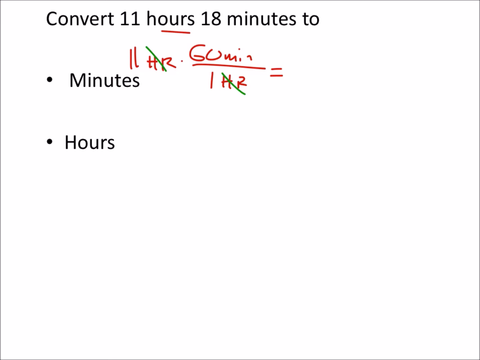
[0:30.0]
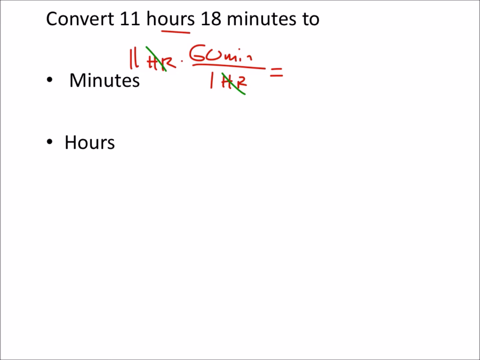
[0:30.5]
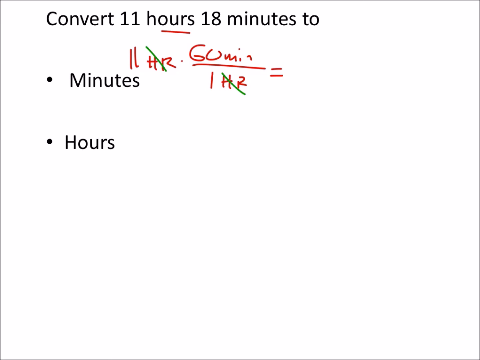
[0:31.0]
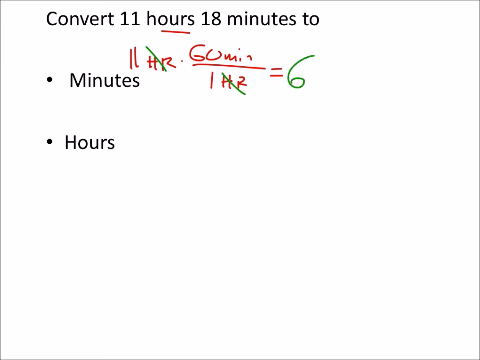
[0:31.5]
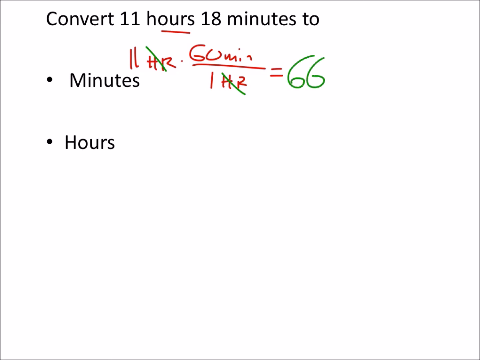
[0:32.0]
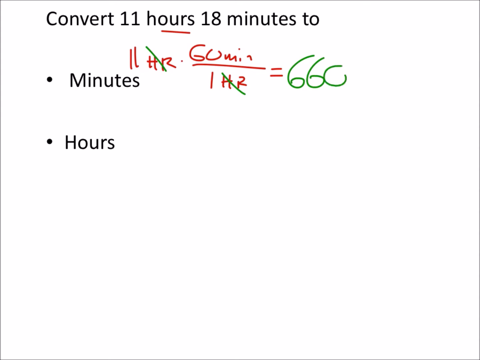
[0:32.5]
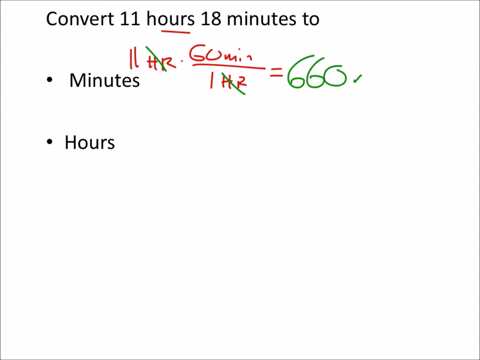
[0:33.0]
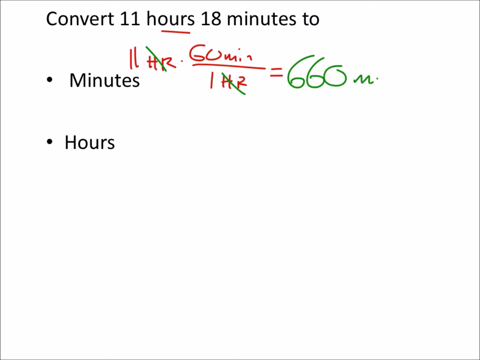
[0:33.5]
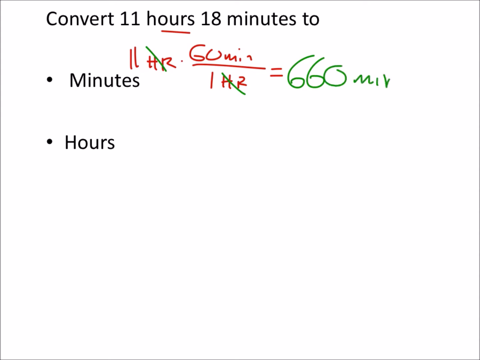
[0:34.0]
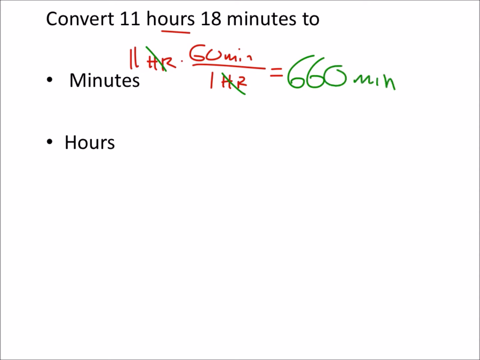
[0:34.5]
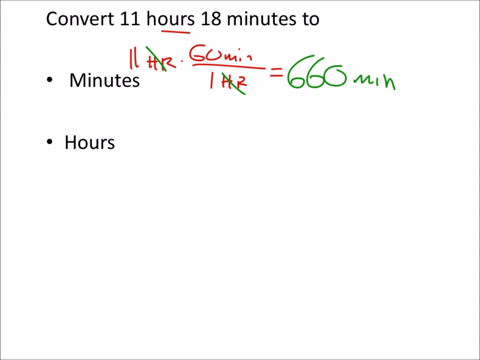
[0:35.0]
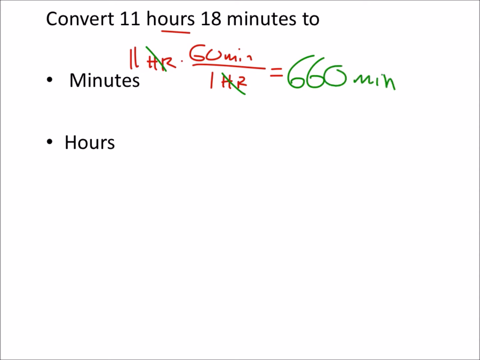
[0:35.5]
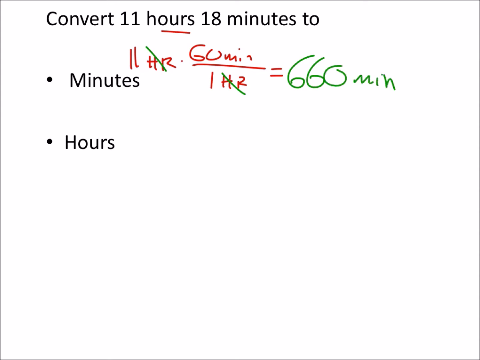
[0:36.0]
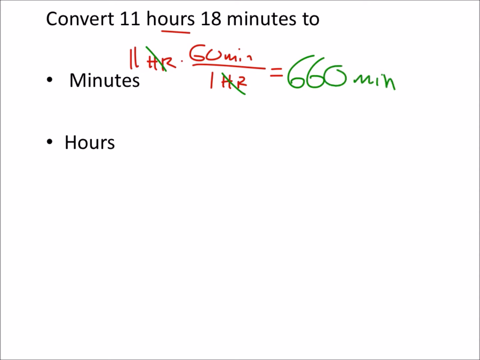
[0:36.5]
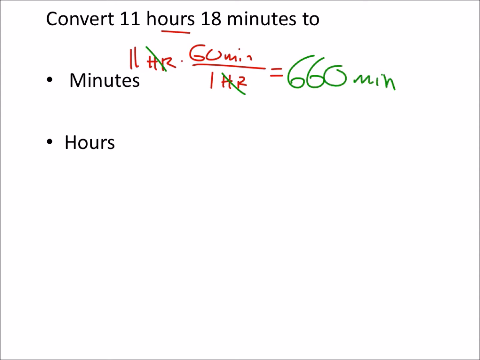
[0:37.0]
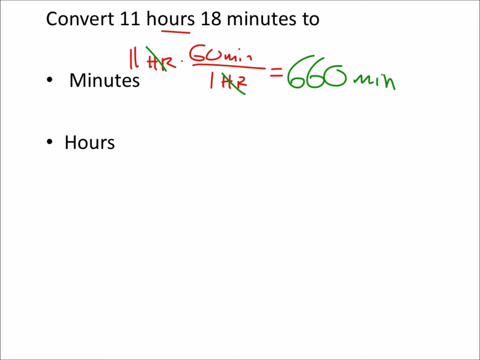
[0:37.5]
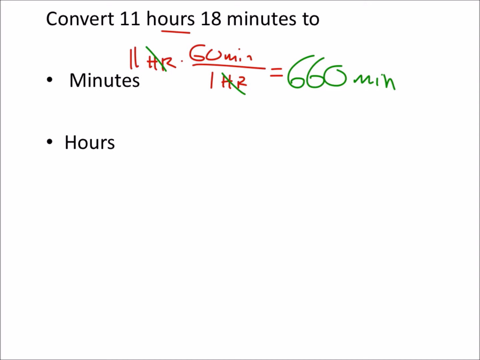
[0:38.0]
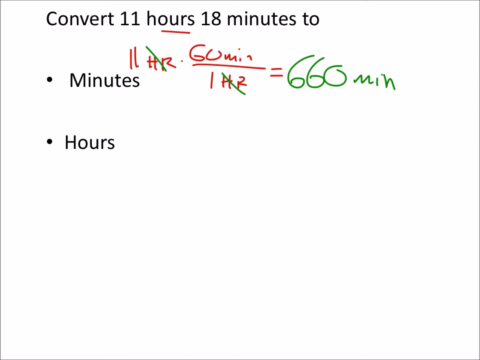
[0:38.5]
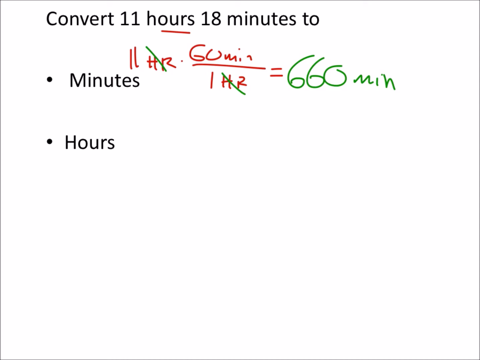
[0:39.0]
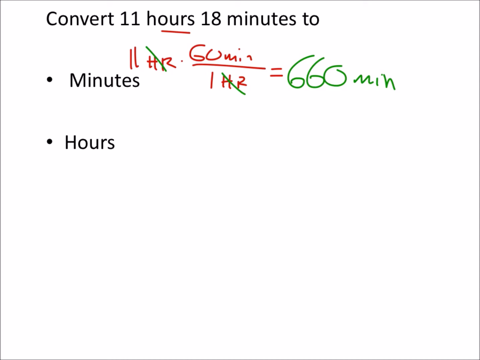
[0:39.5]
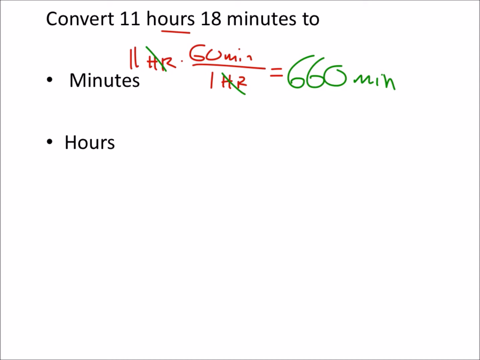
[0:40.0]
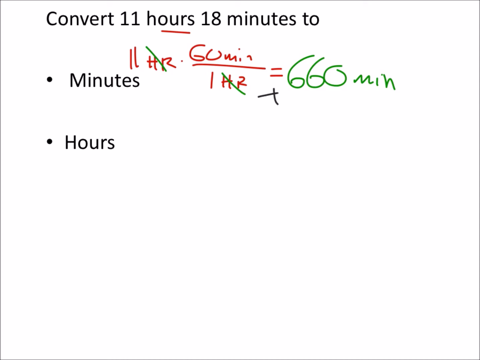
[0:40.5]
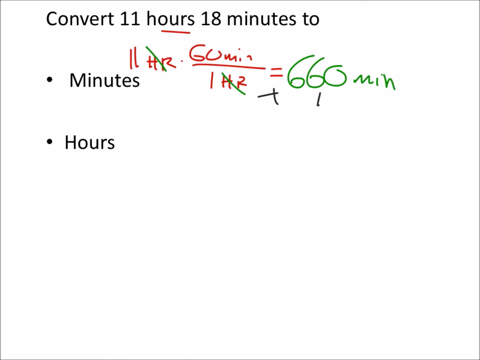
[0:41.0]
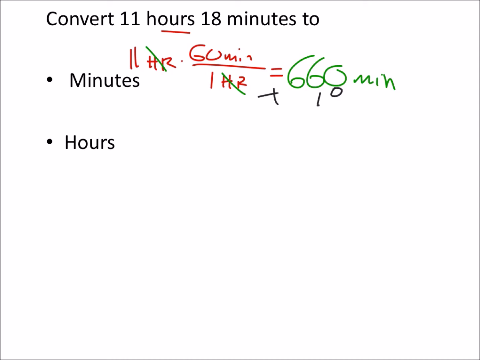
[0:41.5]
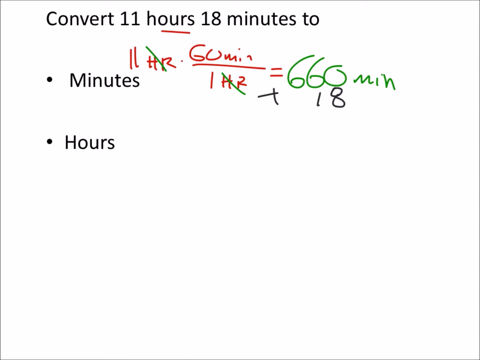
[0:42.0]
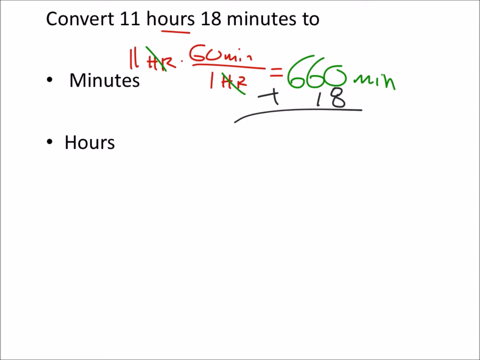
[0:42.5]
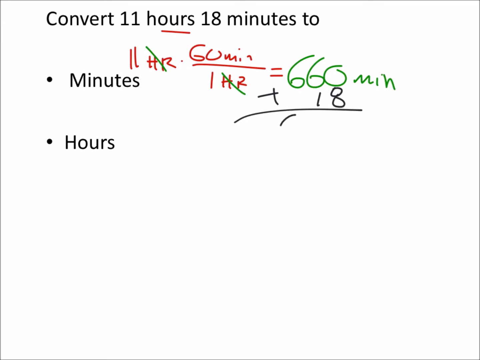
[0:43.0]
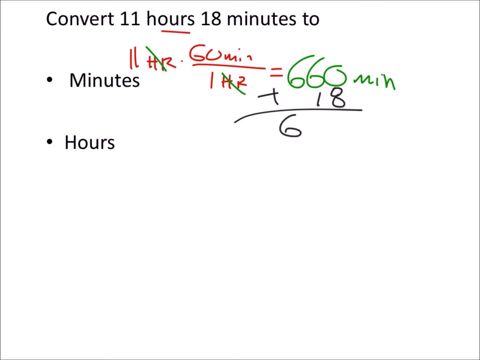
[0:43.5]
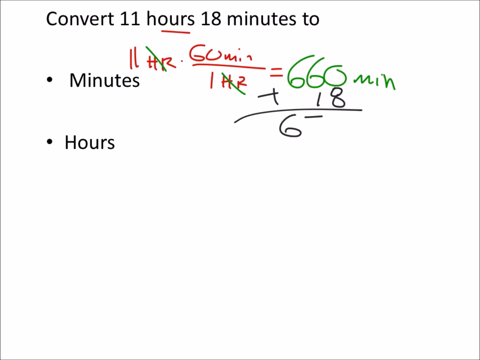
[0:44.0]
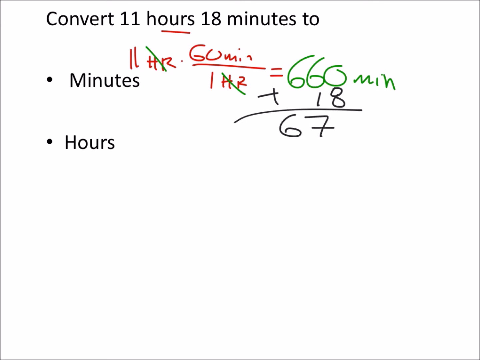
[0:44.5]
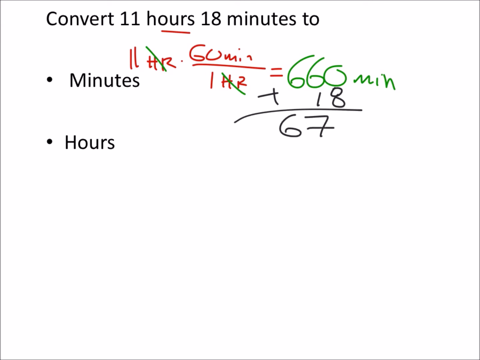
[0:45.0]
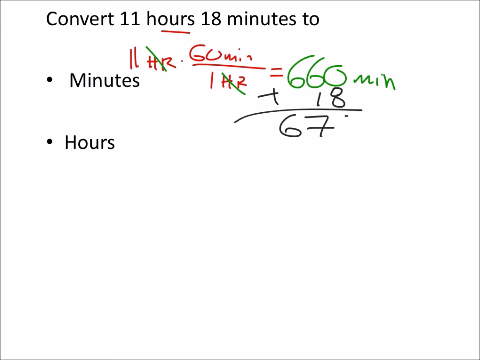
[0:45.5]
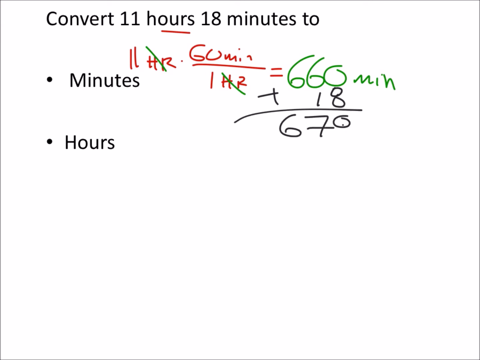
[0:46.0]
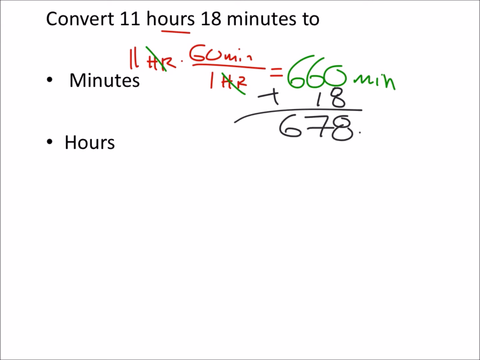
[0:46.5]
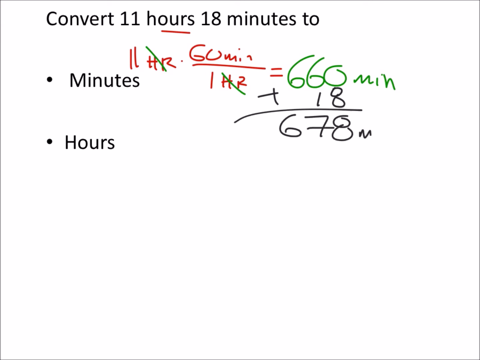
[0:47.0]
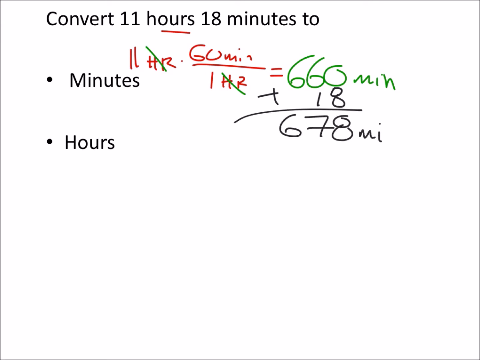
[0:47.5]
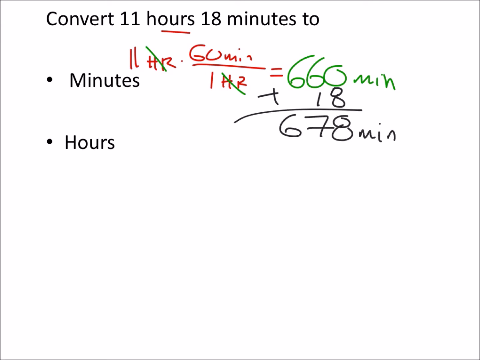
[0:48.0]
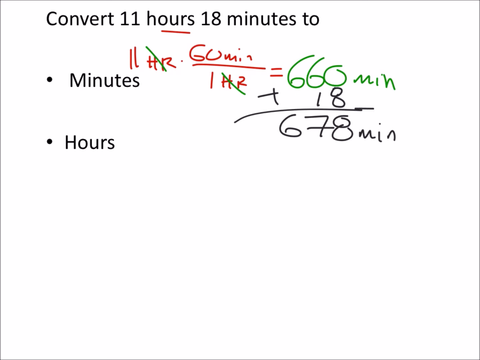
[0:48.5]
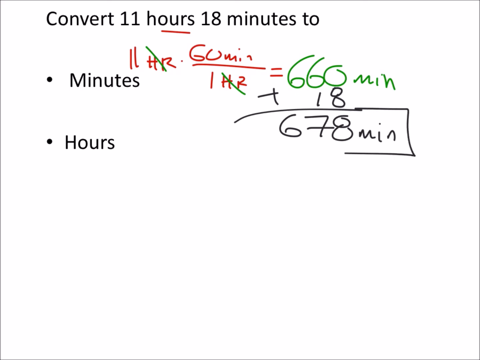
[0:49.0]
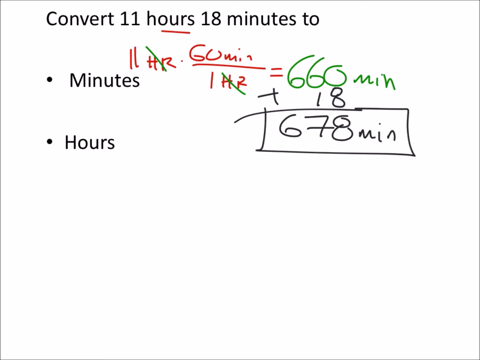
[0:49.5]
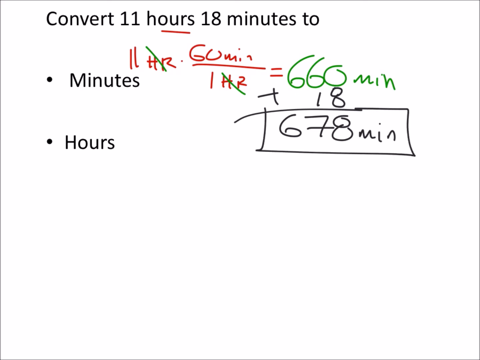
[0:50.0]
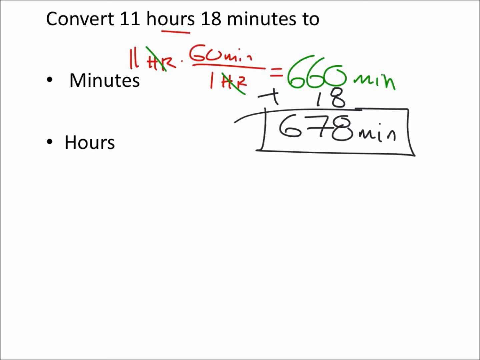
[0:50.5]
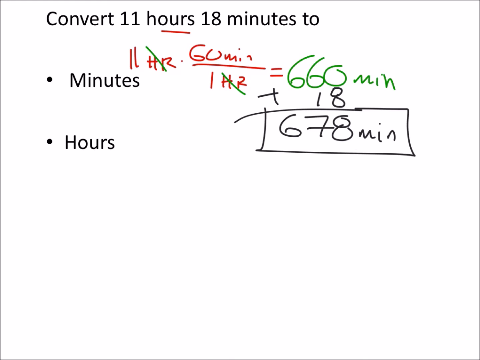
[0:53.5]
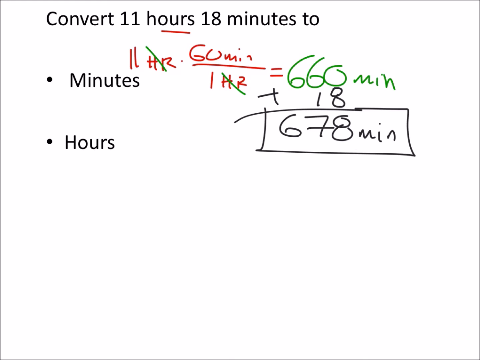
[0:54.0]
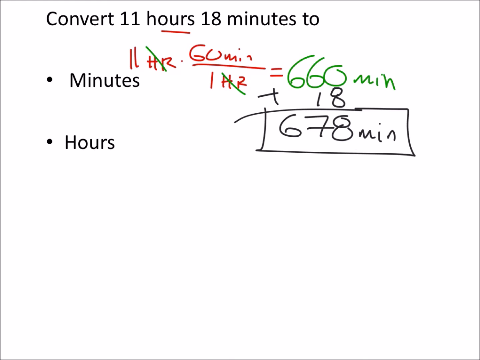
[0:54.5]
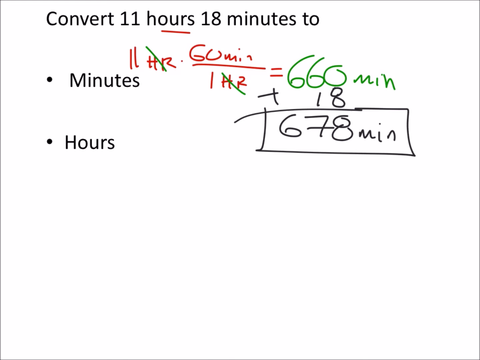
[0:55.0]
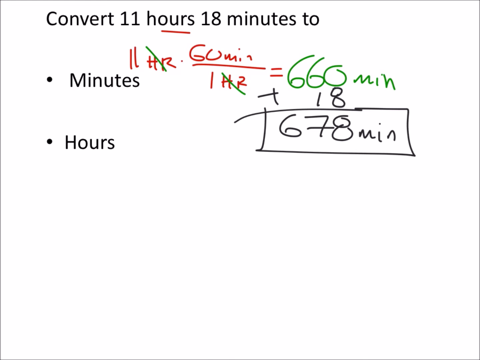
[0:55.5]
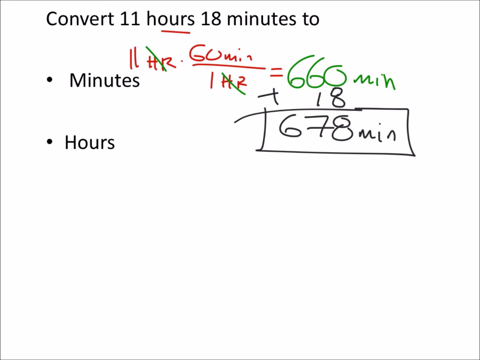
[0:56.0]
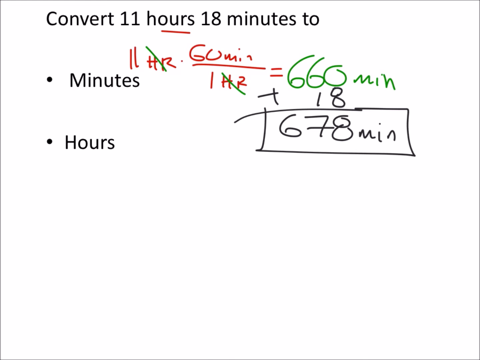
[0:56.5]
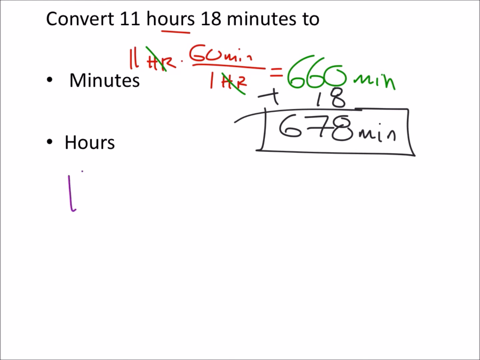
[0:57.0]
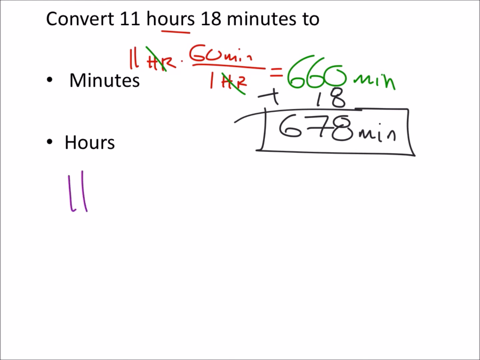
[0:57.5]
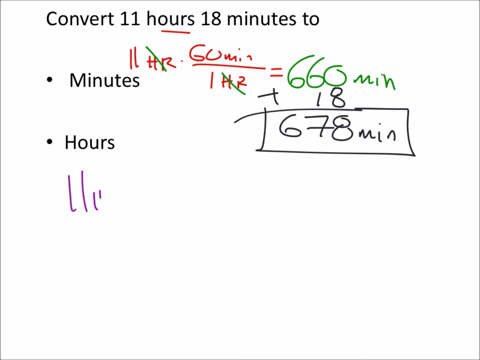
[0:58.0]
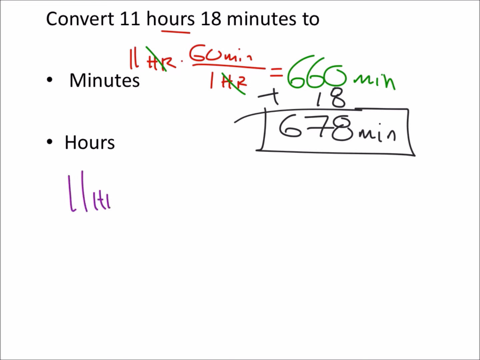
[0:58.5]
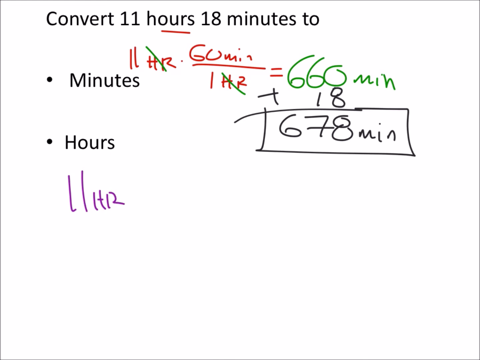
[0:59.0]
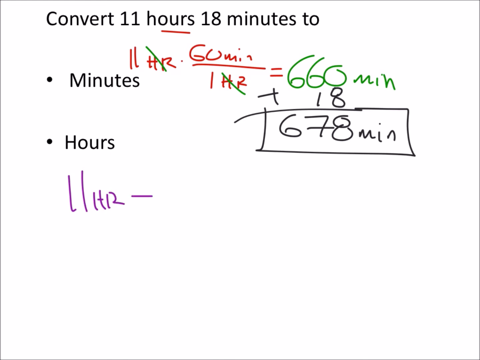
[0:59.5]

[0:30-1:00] The white screen shows black text at the top reading "convert 11 hours 18 minutes to", with two somewhat spaced-out bullet points underneath, the first saying "minutes" and the second "hours". To the right of the "minutes" bullet point, brown handwritten marker text reads "11 HR times 60 min divided by 1 HR equals", and both "HR" labels have a green slash line through them. To the right of the equal sign, "660 min" is being written in large green marker. Underneath, in black marker, a plus sign appears slightly to the left with 18 under the number 660, followed by a straight horizontal line beneath it as an equal line. Under the line, the addition is solved and the answer "678 min" is written, and a box is drawn around this answer. Then, under the "hours" bullet point, text is written in purple marker: "11 HR +".